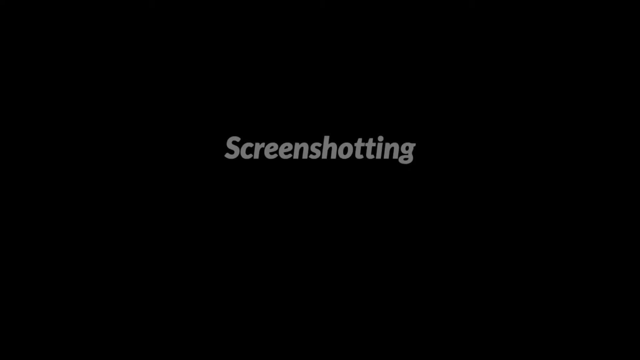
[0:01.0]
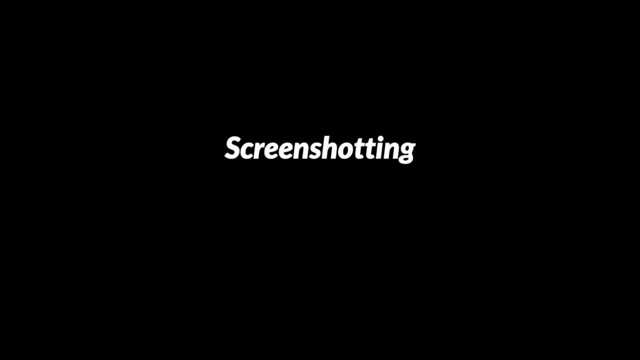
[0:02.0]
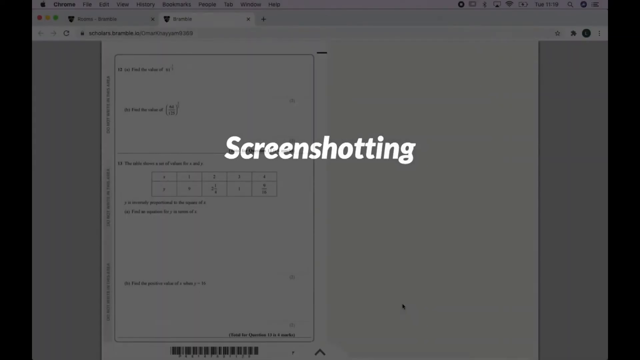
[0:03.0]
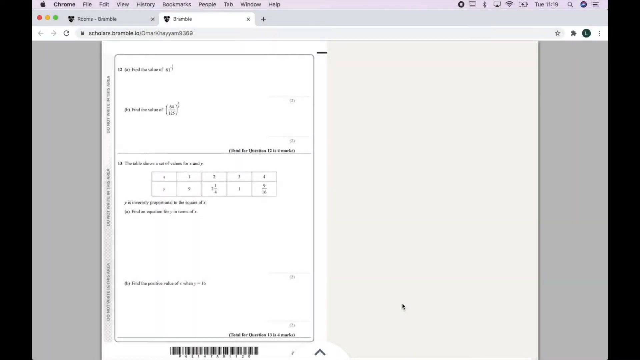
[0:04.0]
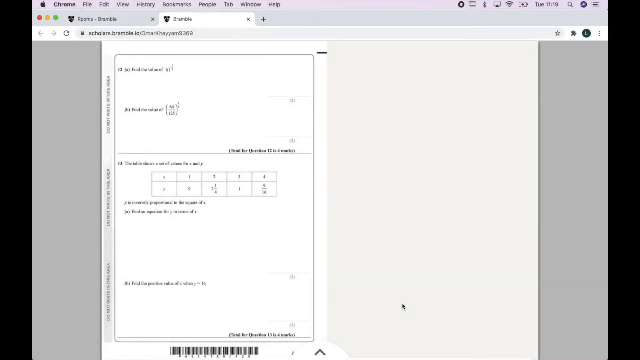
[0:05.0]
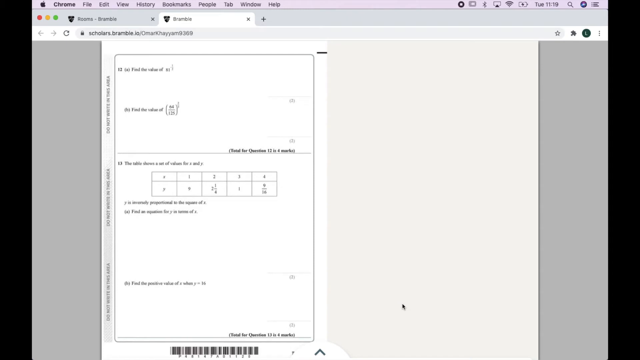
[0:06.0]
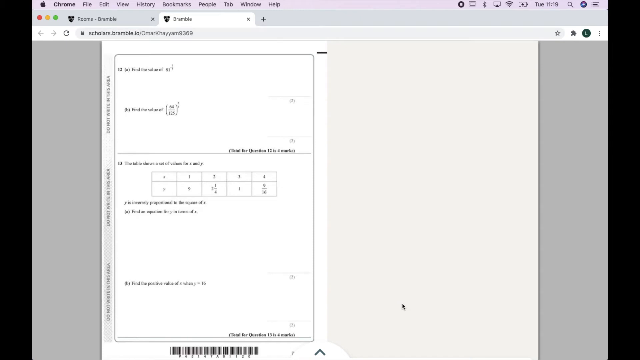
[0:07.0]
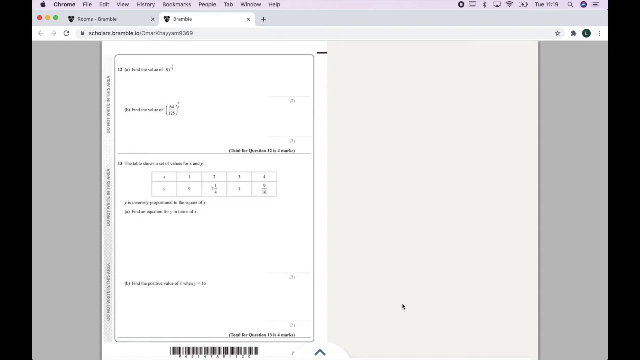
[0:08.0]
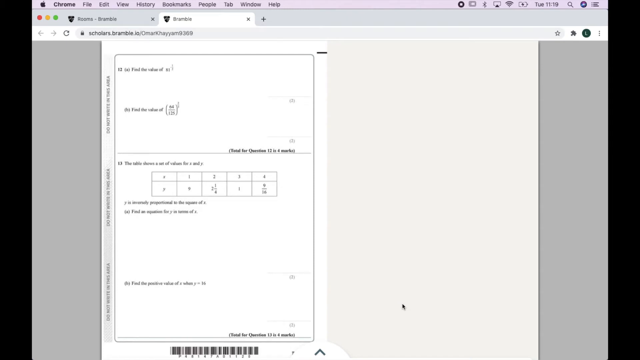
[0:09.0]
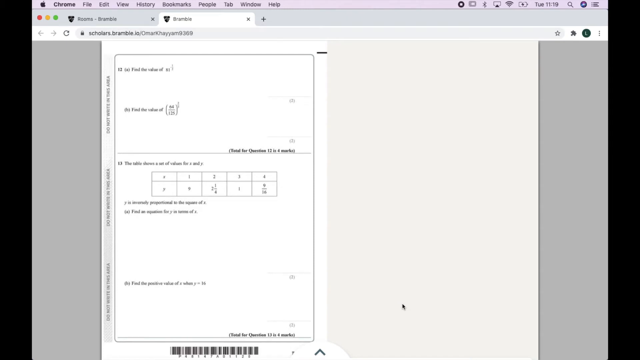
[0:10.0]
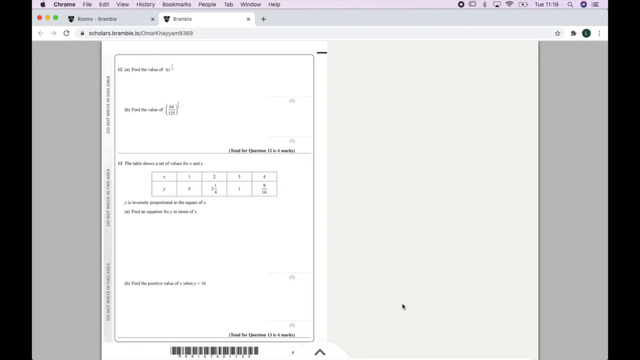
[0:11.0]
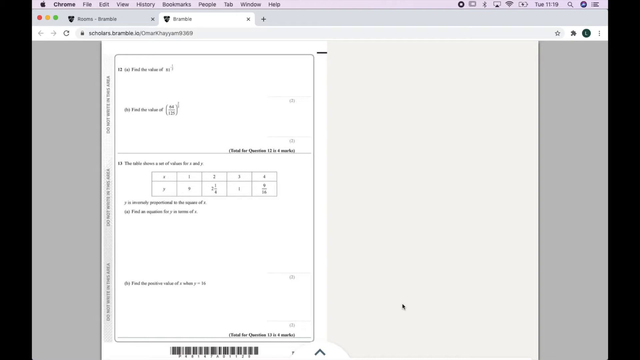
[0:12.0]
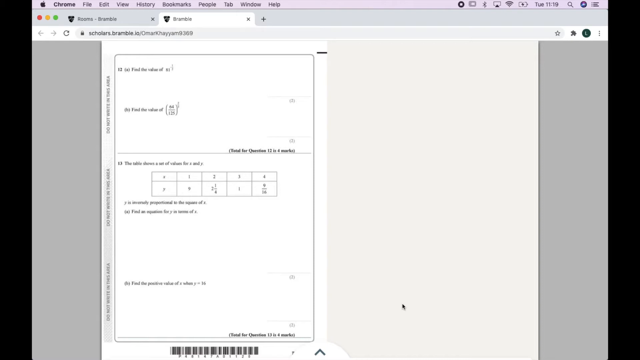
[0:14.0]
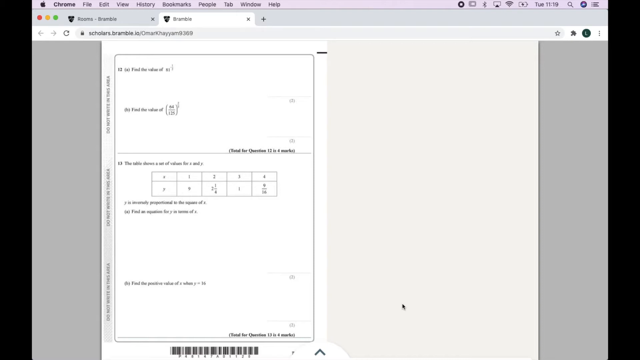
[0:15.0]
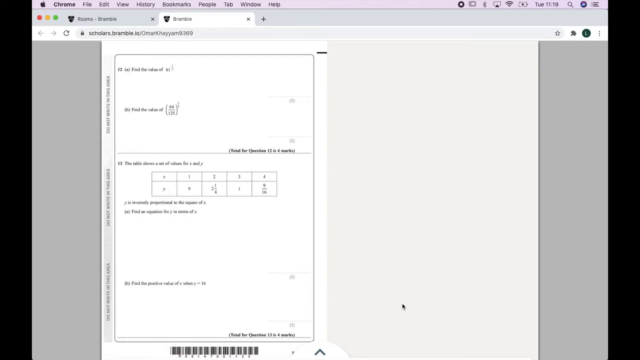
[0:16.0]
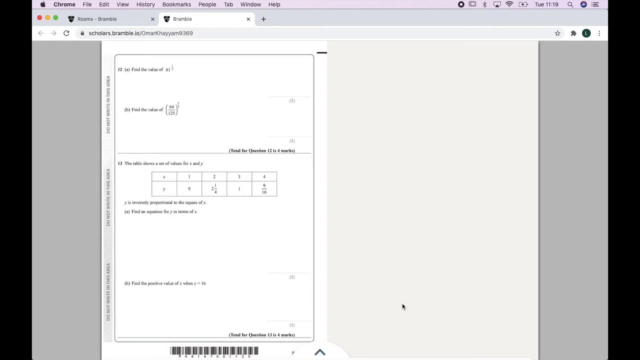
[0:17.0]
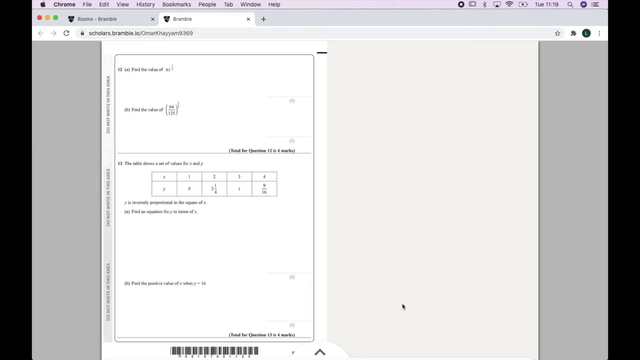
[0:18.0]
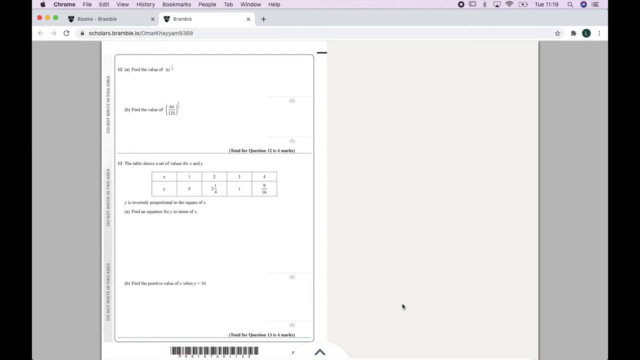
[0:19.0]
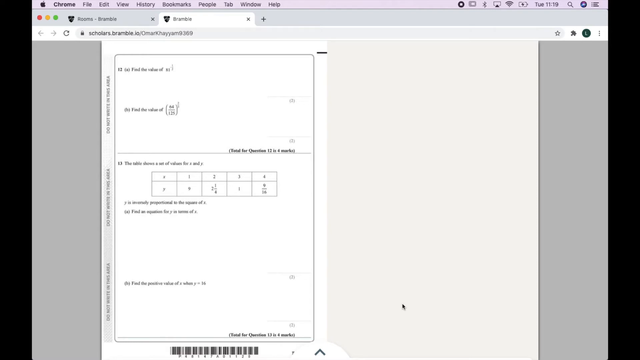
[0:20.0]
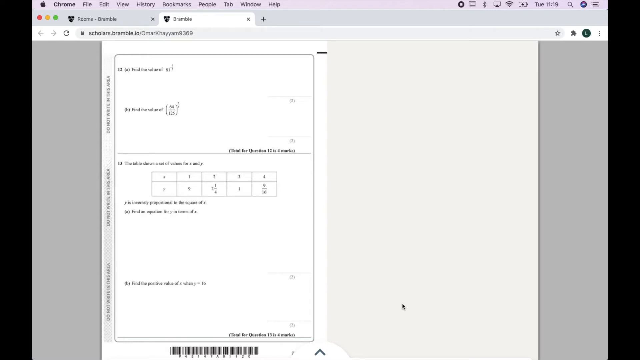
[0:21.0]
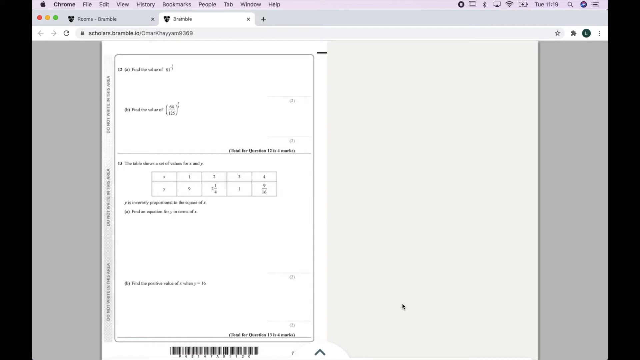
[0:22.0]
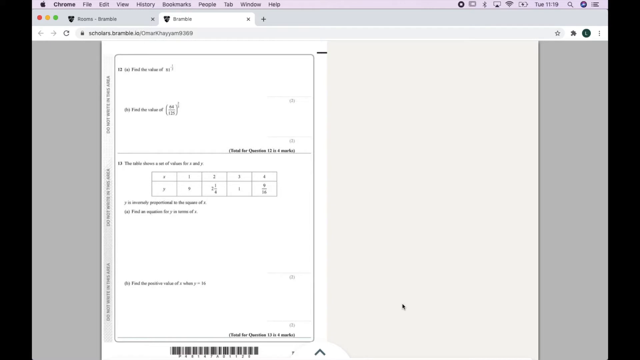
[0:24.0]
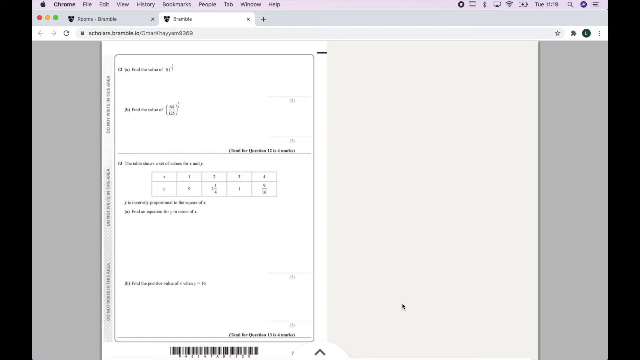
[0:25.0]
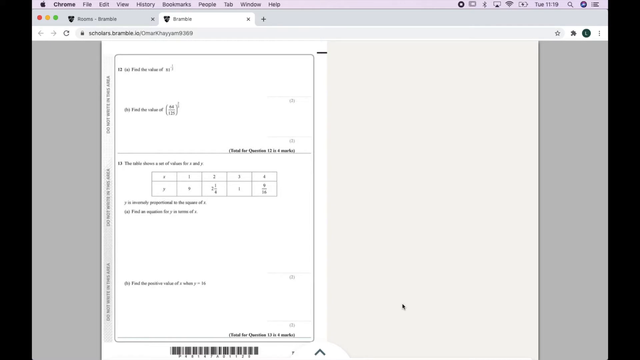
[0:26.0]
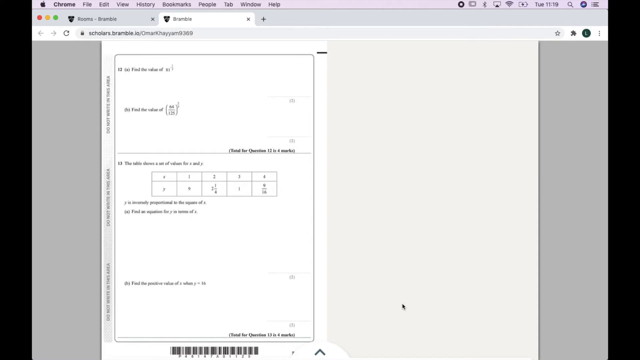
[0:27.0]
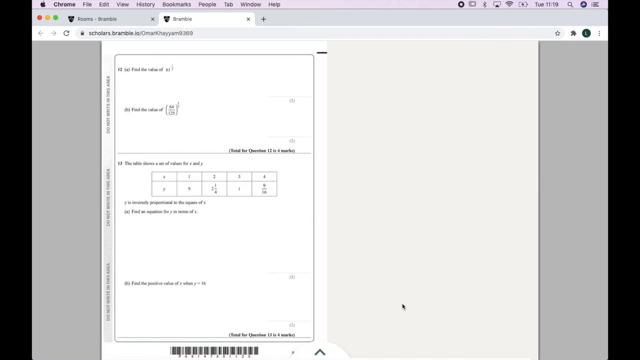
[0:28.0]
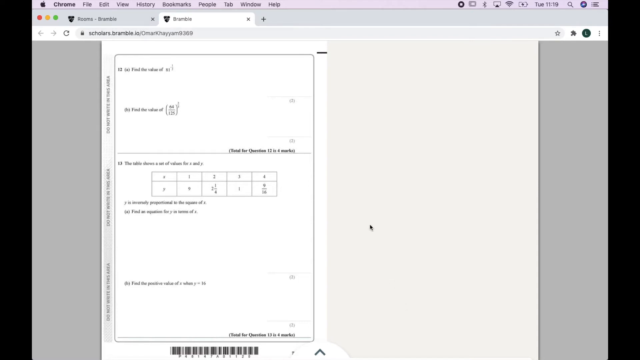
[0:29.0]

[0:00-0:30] The word "screenshotting" appears in white font, the only word on the screen. A screen then comes up, with Chrome in the background and two tabs open. The current tab shows a question paper with questions 1.2 and 1.3, and there is a box in one of the questions. A cursor moves up on the screen. Nothing is written or drawn and no hand appears; only the question paper is shown.